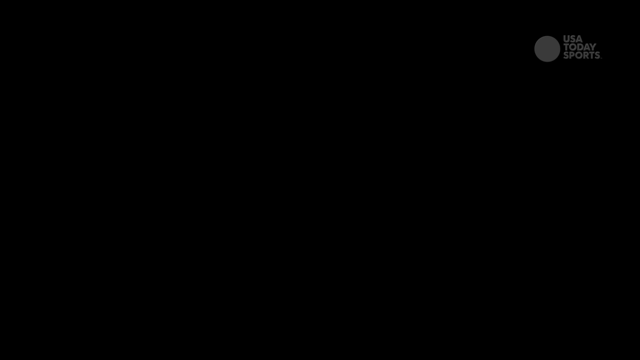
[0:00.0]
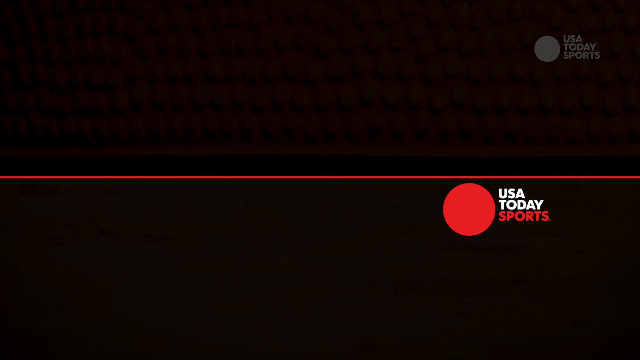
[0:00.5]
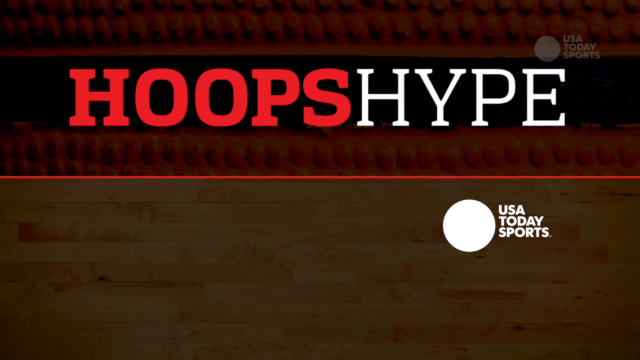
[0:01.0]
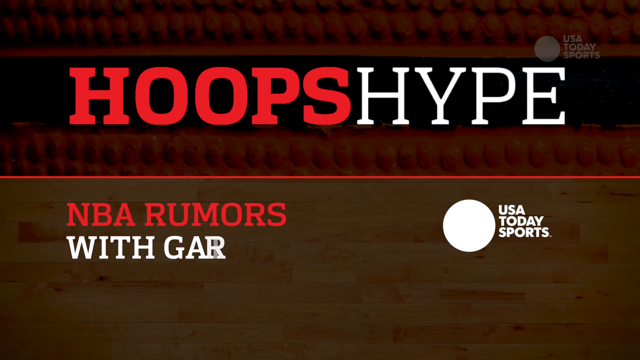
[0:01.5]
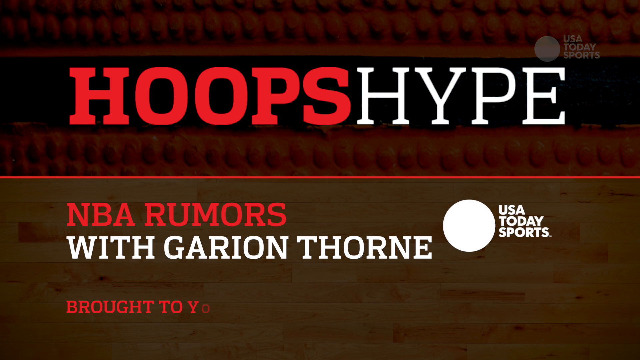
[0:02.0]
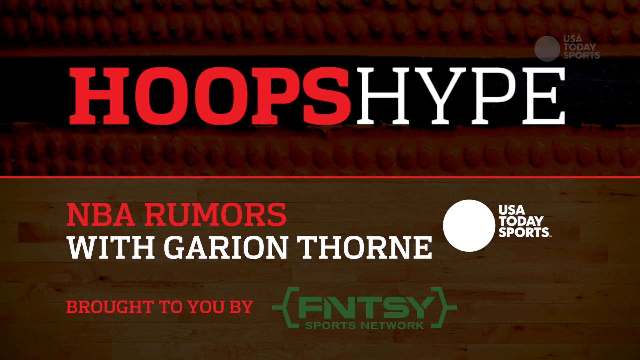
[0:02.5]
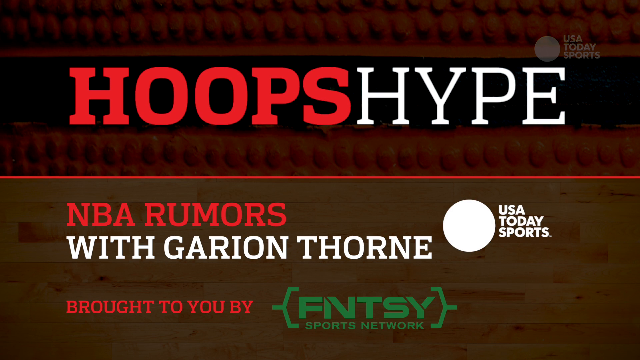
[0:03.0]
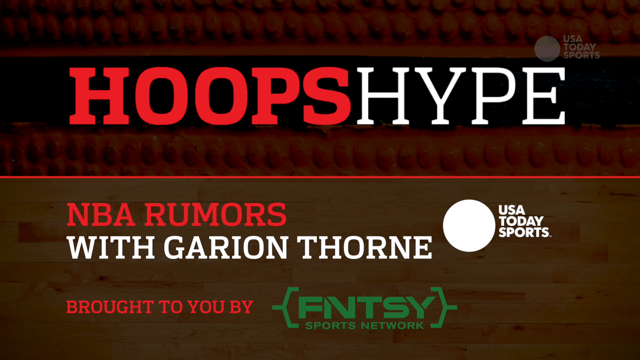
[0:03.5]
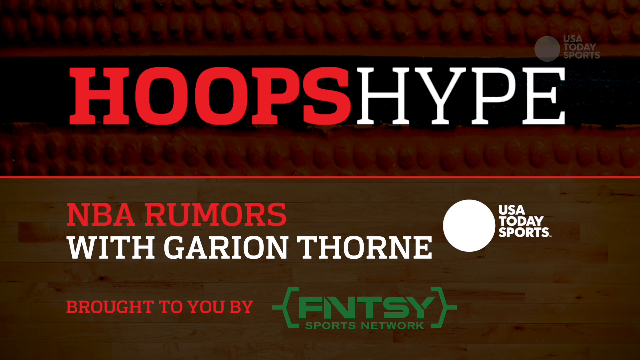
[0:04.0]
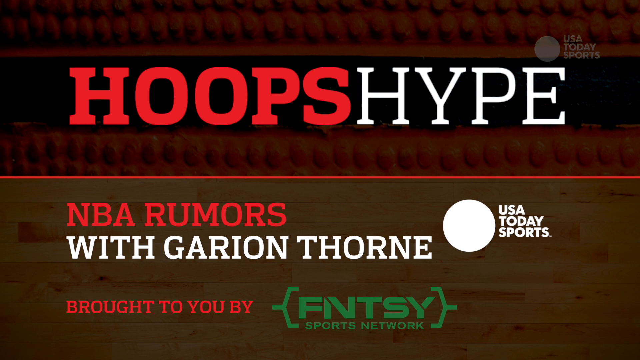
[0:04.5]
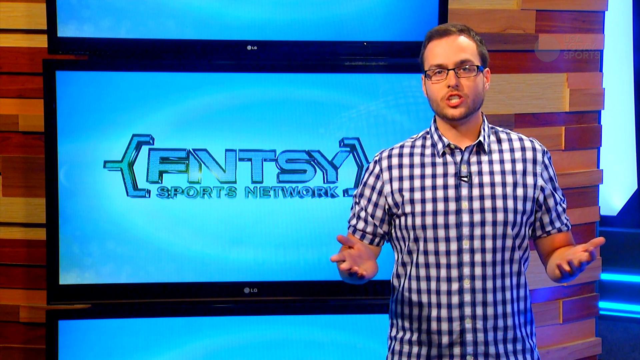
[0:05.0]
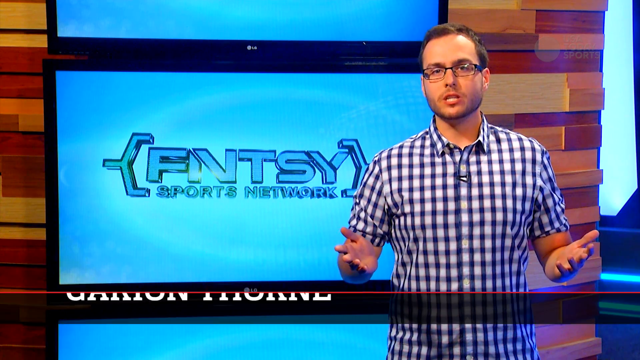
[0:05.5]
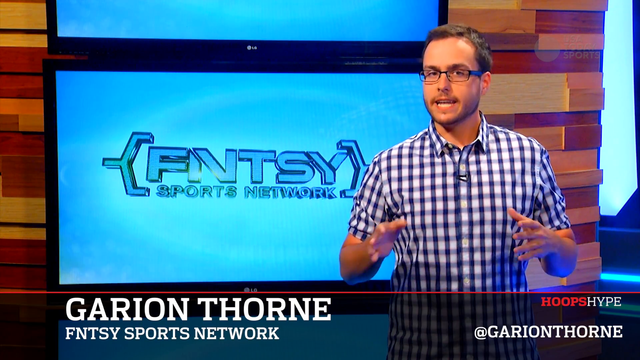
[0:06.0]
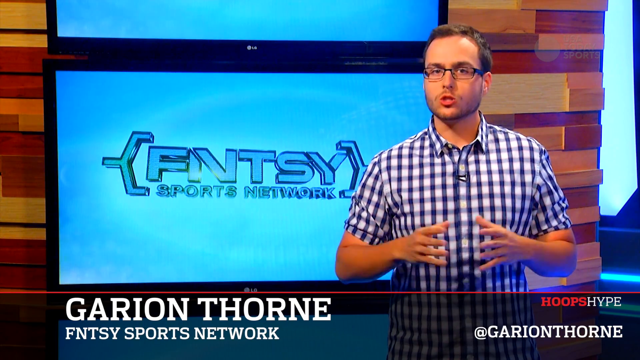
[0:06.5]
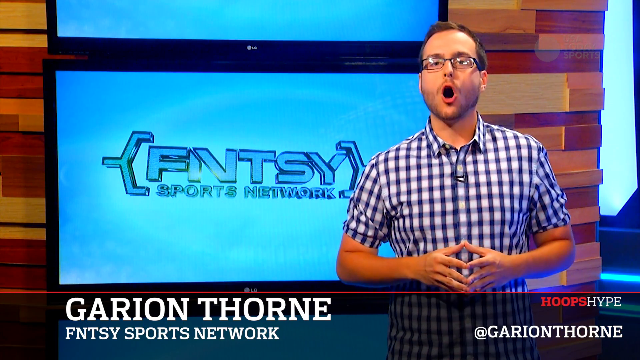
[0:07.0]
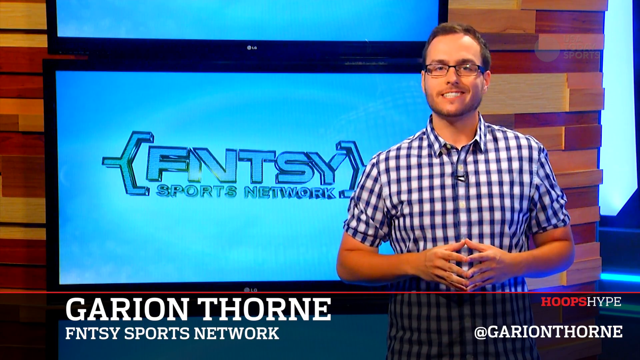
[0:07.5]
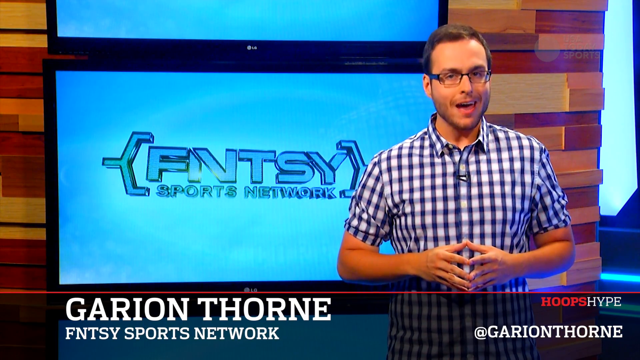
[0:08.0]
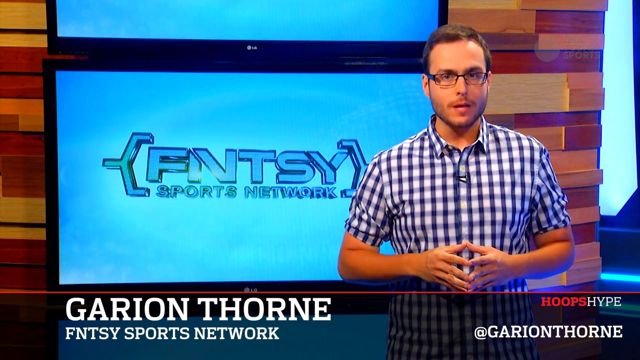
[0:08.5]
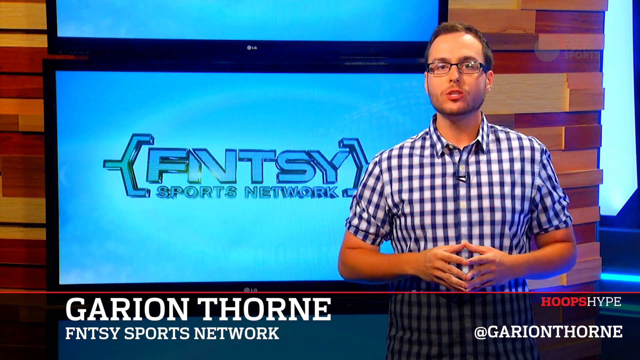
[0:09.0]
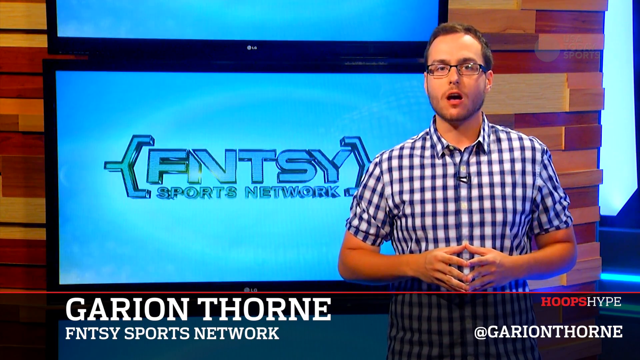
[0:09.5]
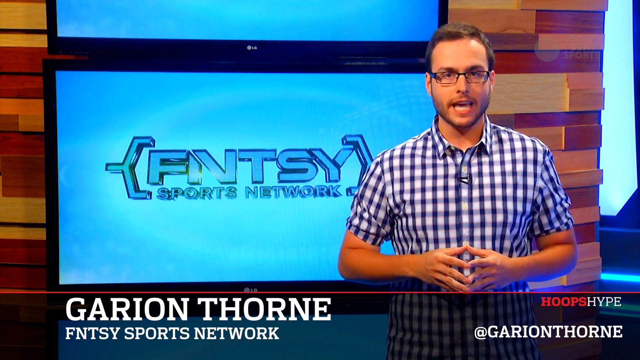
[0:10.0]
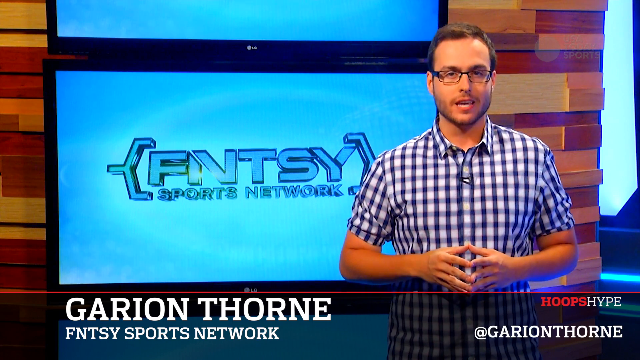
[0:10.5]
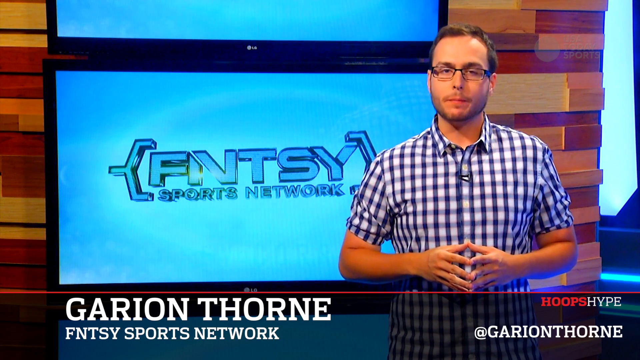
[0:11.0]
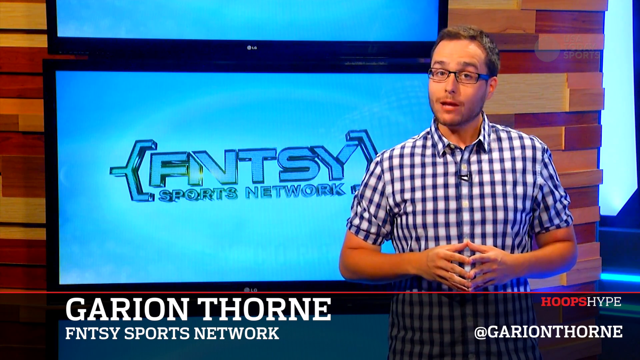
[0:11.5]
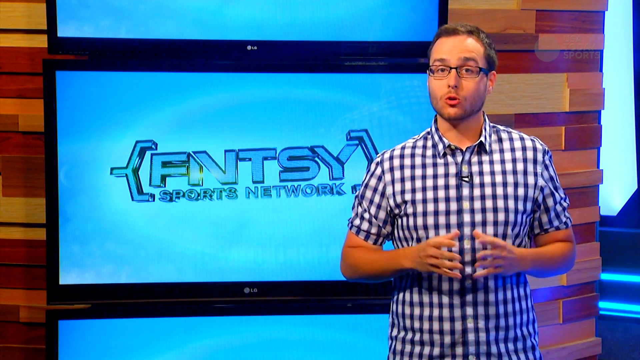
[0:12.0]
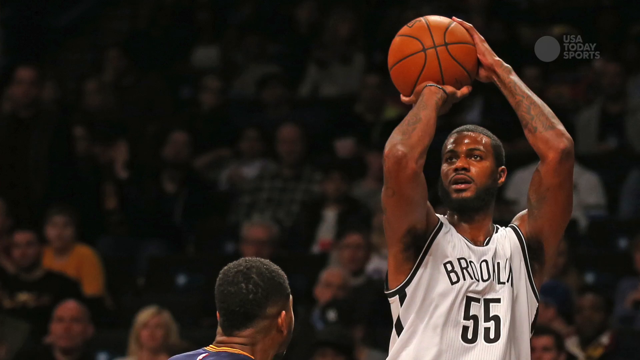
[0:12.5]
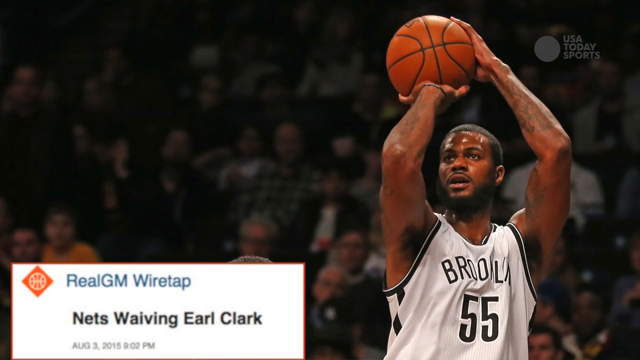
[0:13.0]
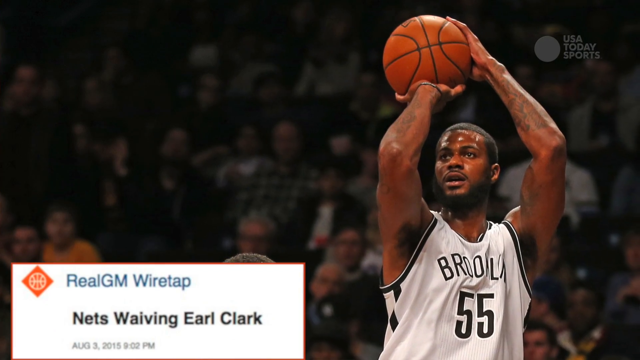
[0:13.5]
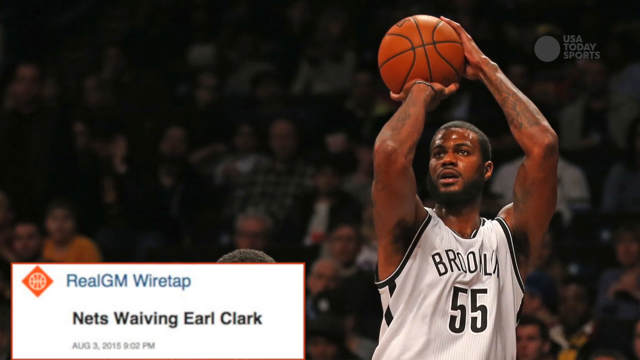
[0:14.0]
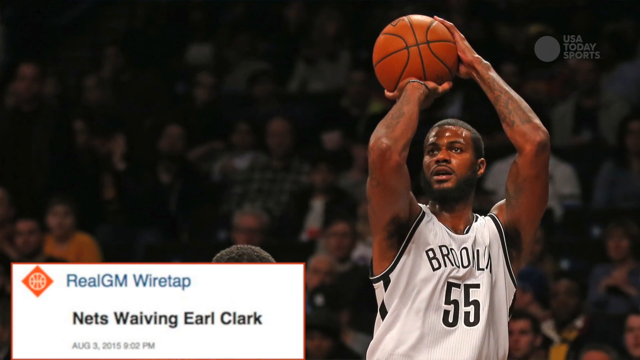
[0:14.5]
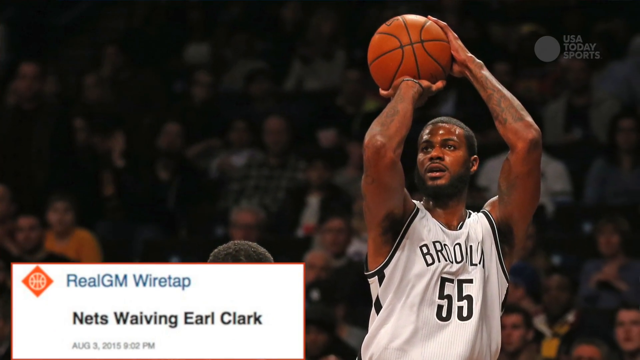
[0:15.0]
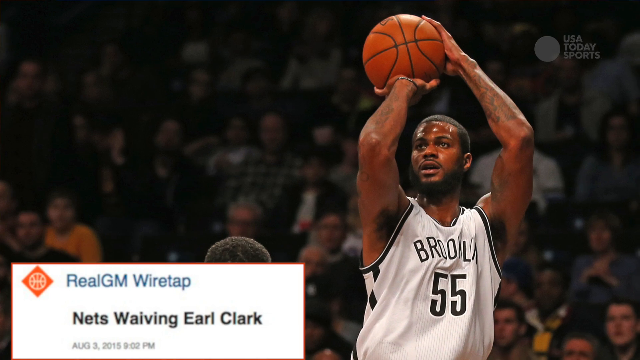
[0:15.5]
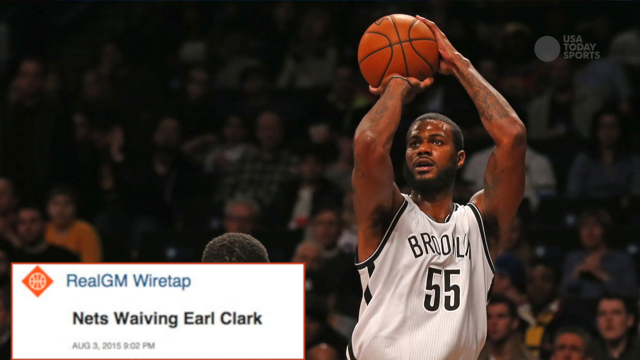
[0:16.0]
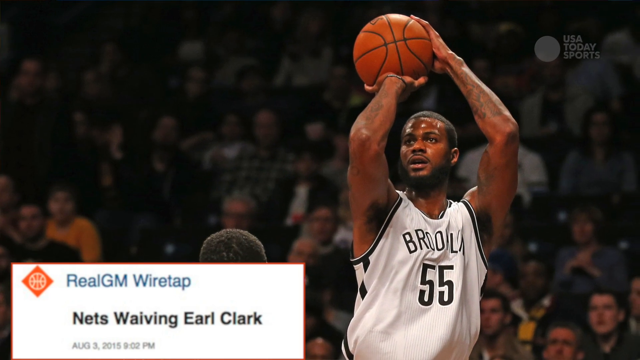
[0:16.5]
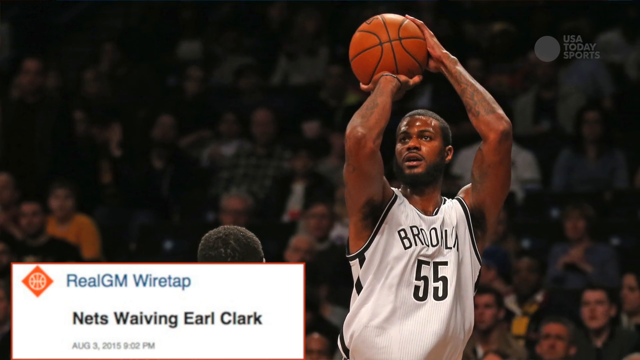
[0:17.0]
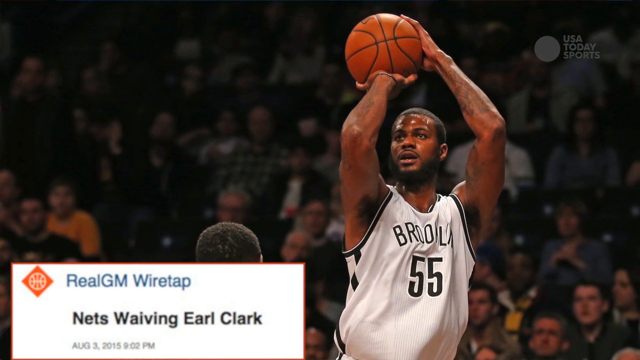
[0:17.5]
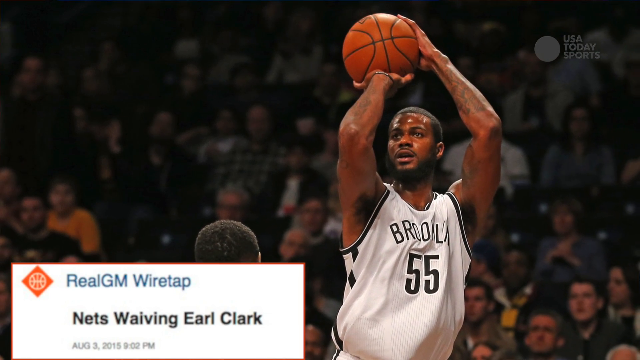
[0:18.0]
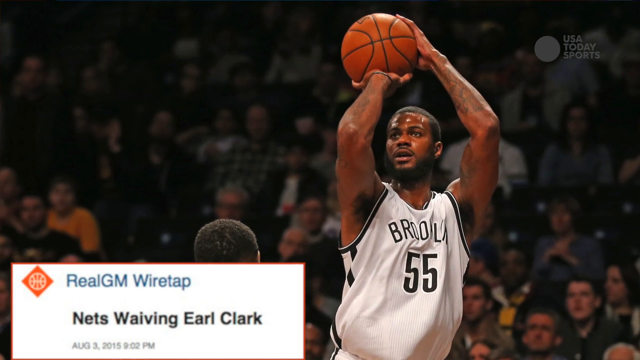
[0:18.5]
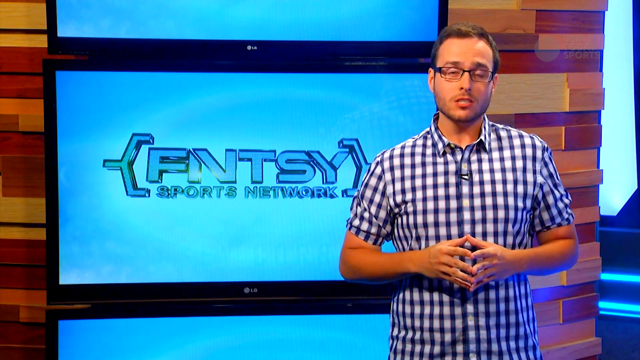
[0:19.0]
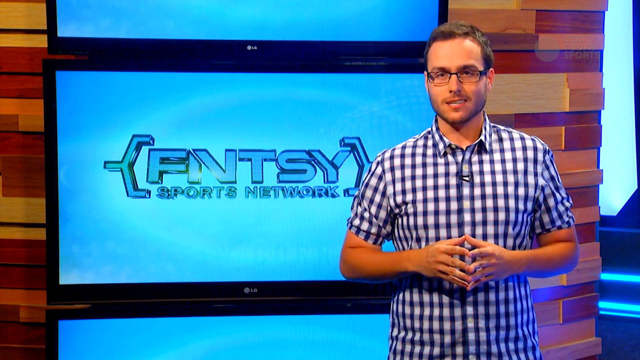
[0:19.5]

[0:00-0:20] On-screen text reads "hoops hype," "NBA rumors with Gary and Thorne" and "USA Today Sports"; "hoops" and "NBA rumors" are in red and the rest is in white. A man named Garyon Thorne appears on TV, wearing a short-sleeved plaid shirt and glasses, with brown hair and a mic attached to his shirt. Behind him is a blue screen that says "Fantasy Sports Institute," with "Fantasy" spelled as an abbreviation. He talks with his hands. A basketball player in a white jersey holds a basketball and prepares to shoot it. Text reads "Nets waving Earl Clark" and "It's a real GM Wiretap."